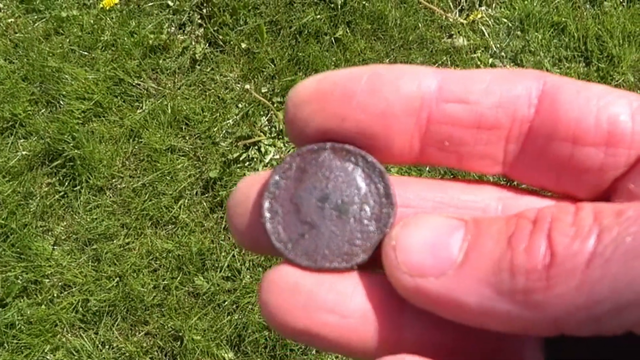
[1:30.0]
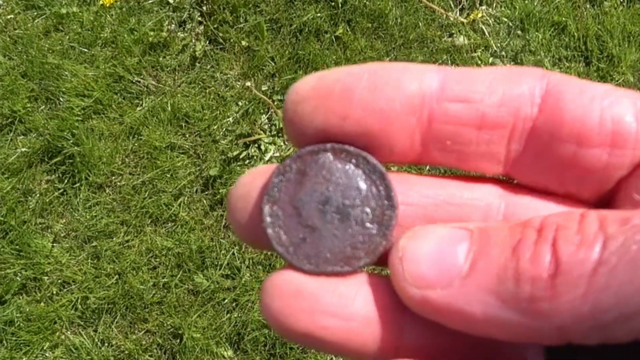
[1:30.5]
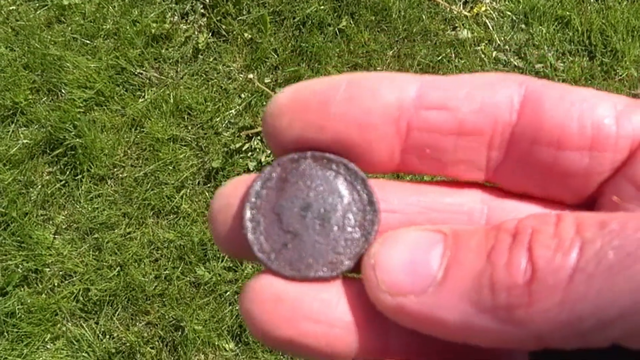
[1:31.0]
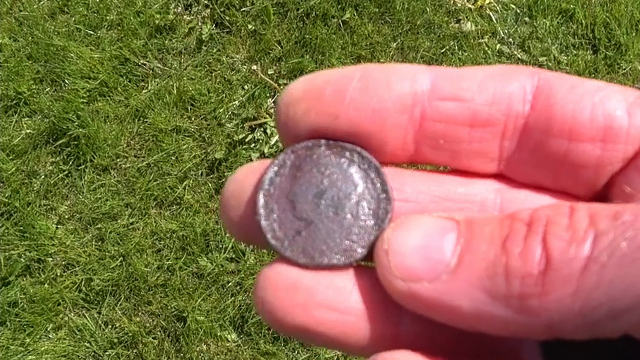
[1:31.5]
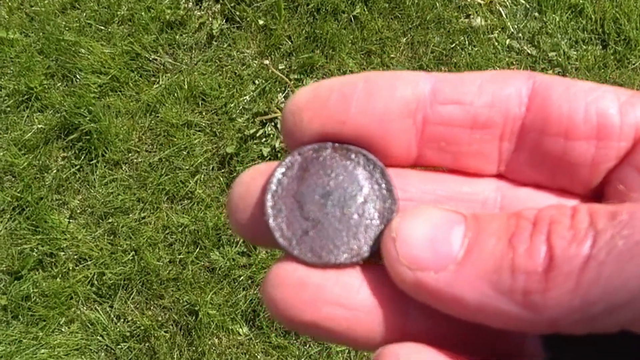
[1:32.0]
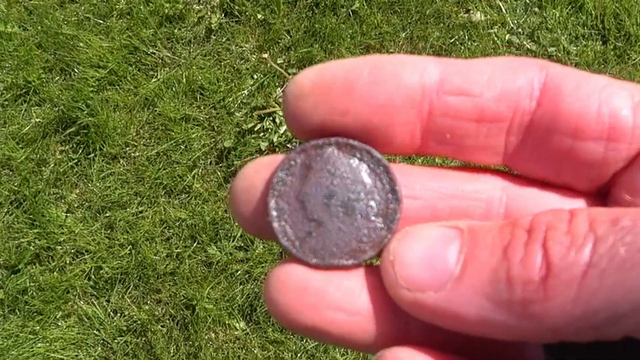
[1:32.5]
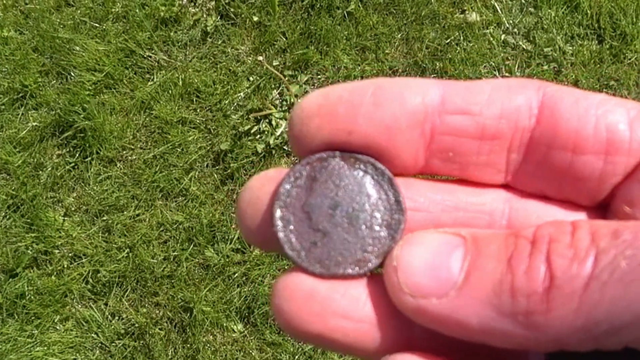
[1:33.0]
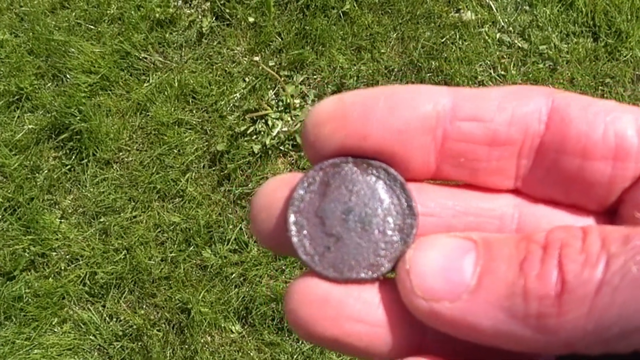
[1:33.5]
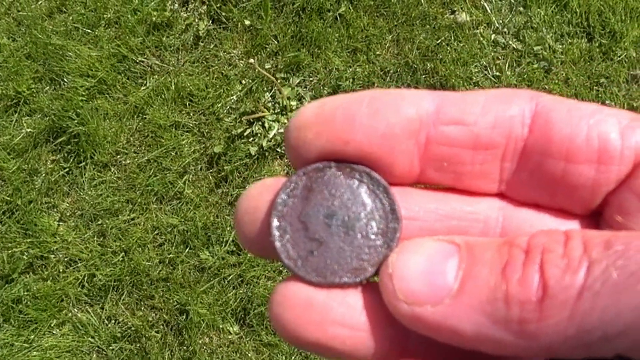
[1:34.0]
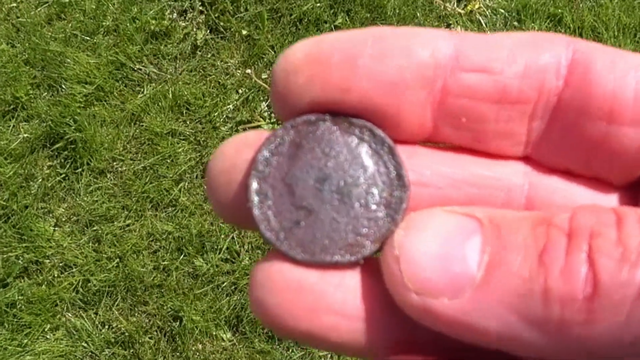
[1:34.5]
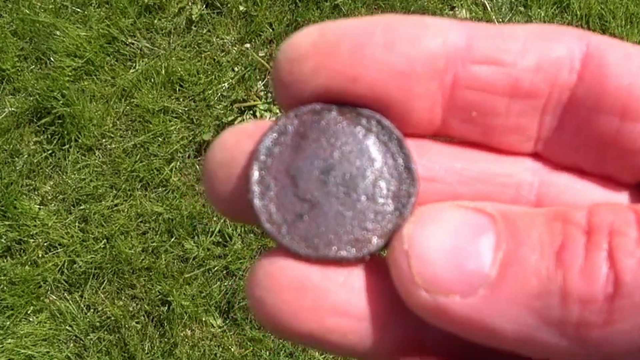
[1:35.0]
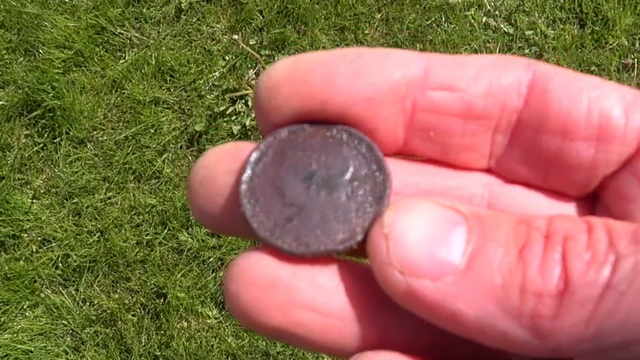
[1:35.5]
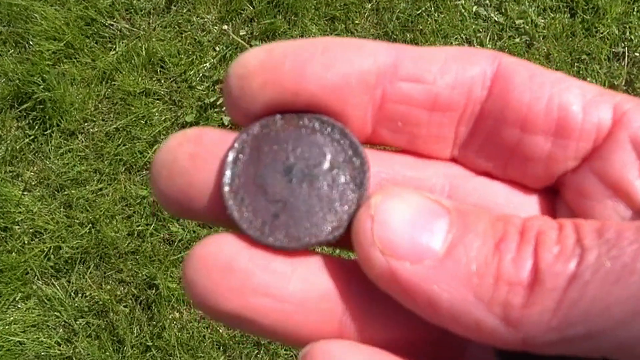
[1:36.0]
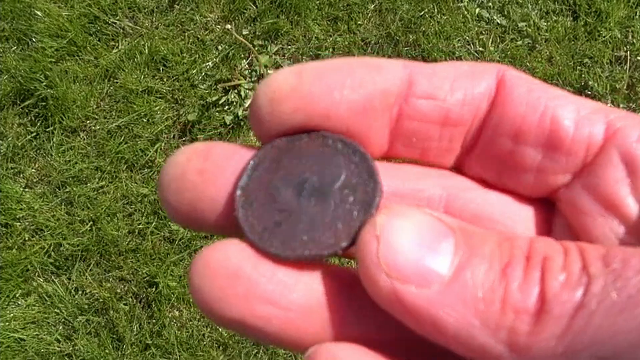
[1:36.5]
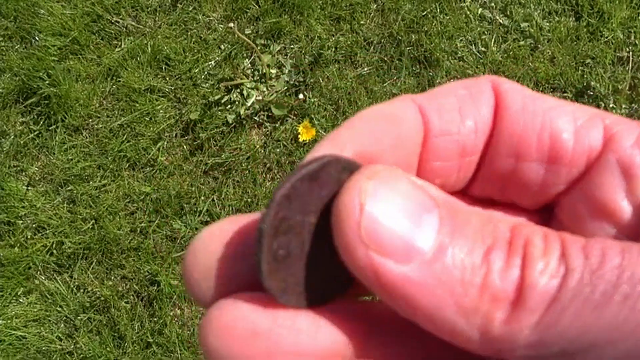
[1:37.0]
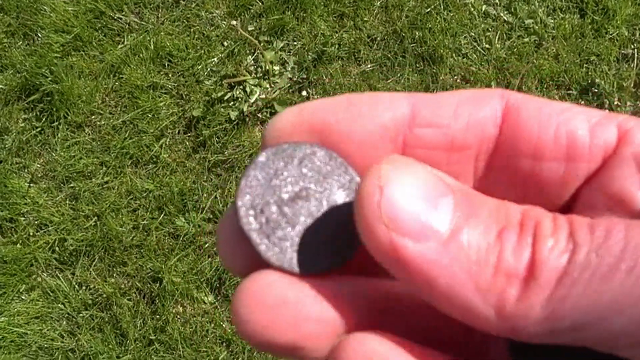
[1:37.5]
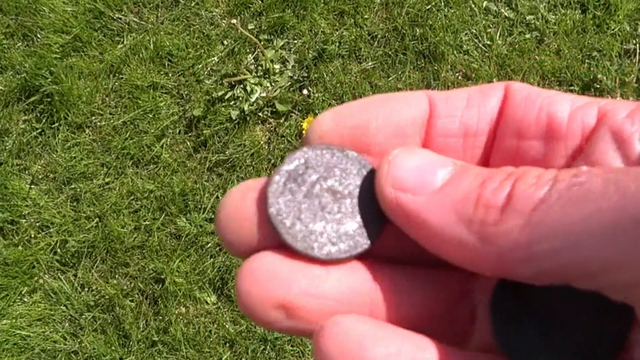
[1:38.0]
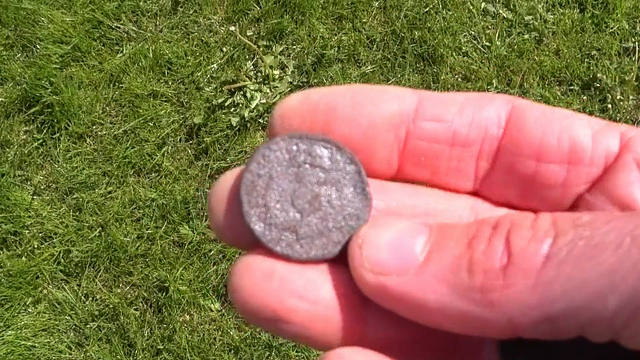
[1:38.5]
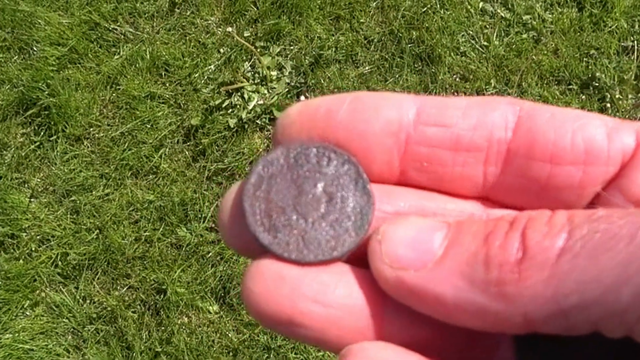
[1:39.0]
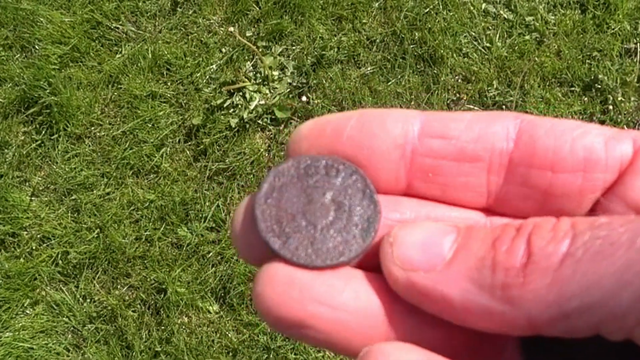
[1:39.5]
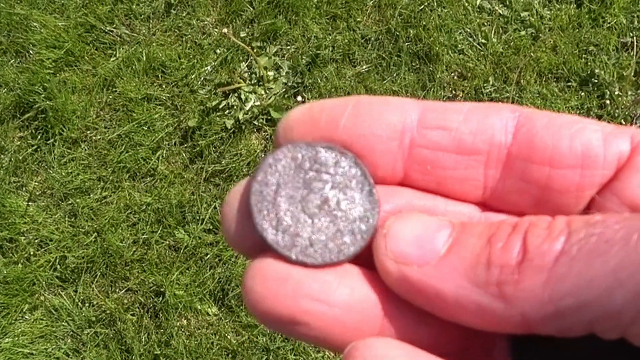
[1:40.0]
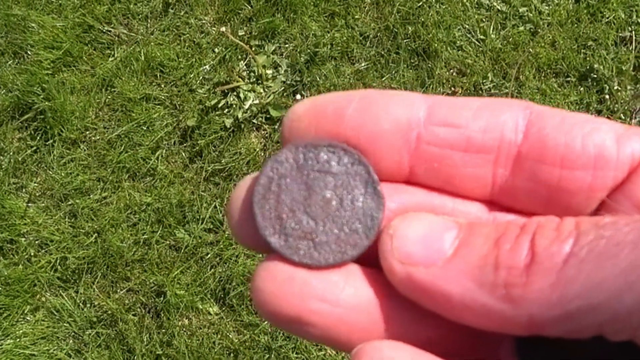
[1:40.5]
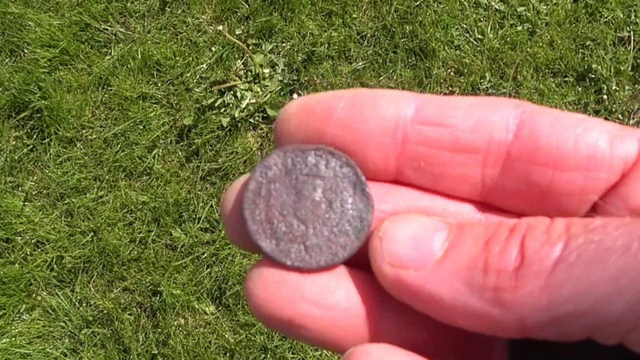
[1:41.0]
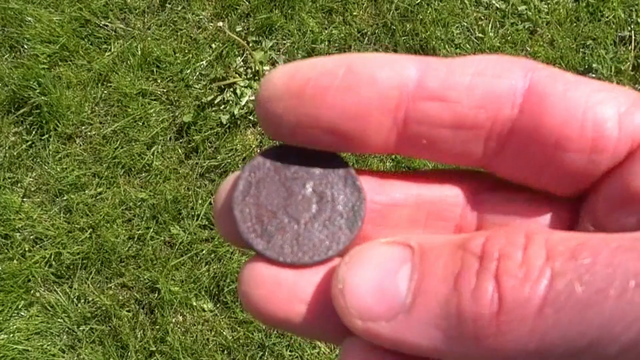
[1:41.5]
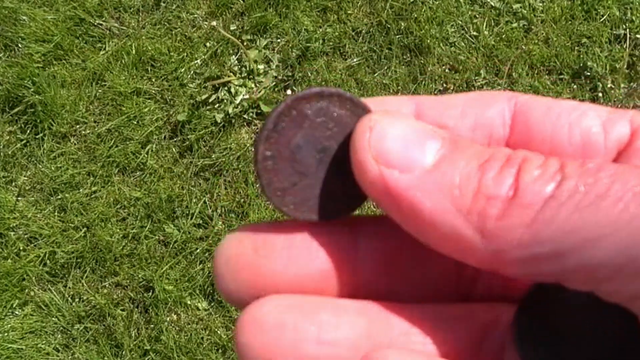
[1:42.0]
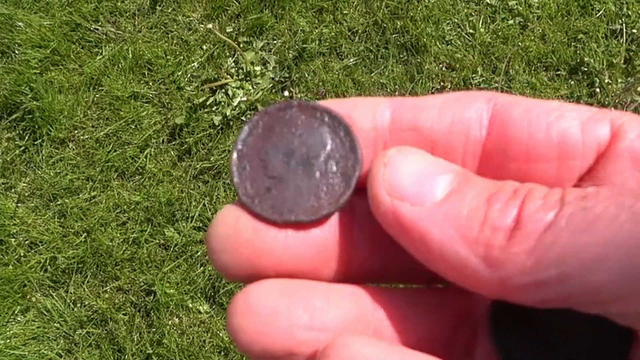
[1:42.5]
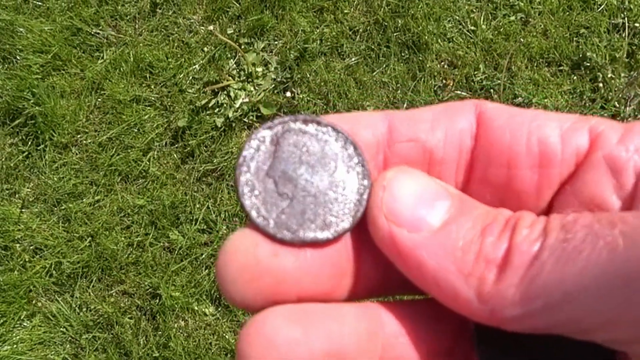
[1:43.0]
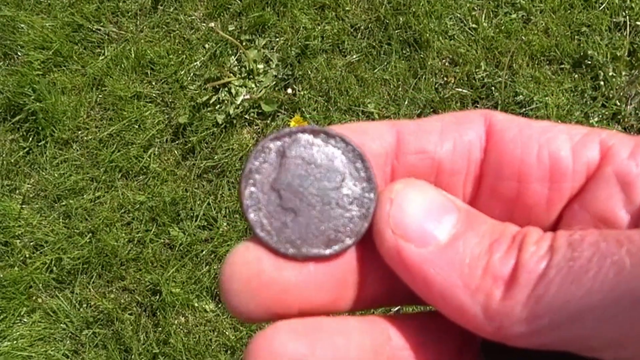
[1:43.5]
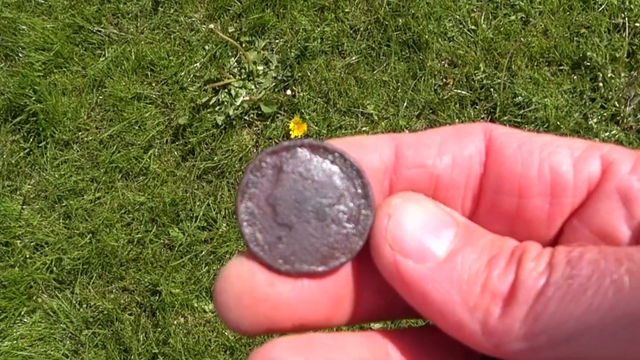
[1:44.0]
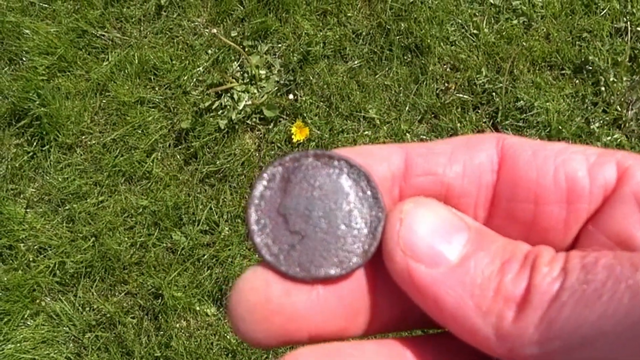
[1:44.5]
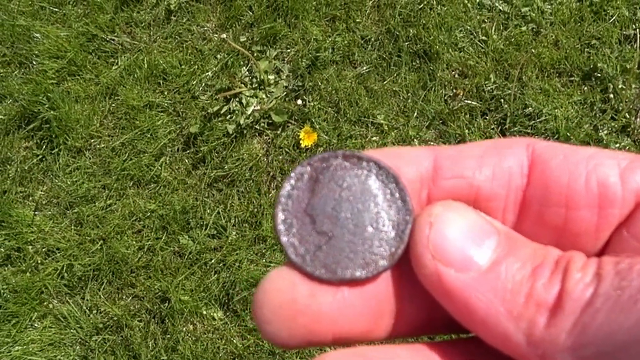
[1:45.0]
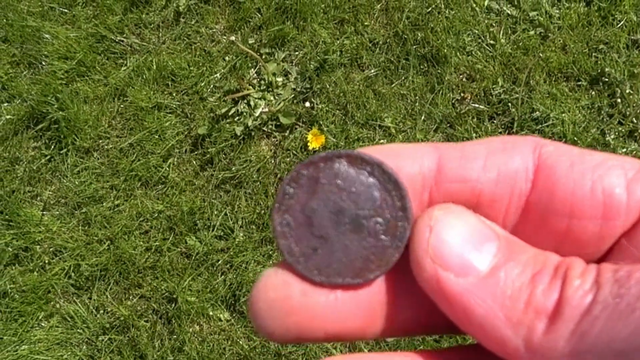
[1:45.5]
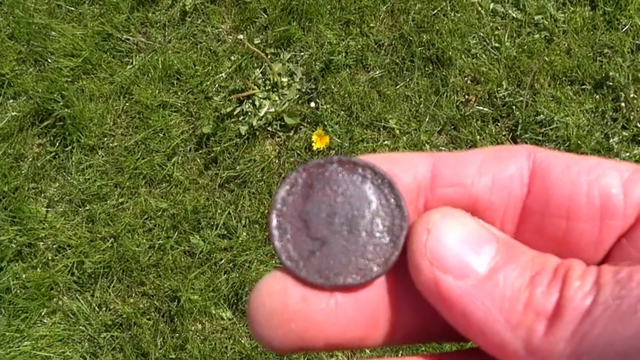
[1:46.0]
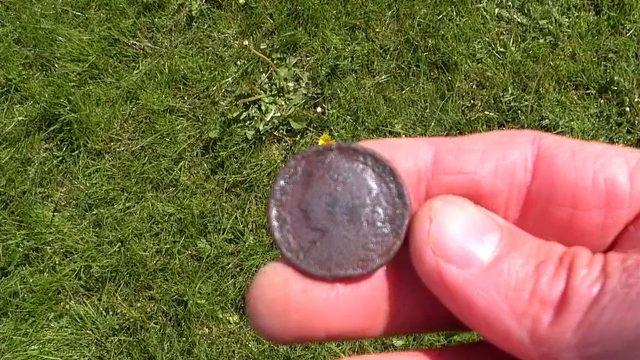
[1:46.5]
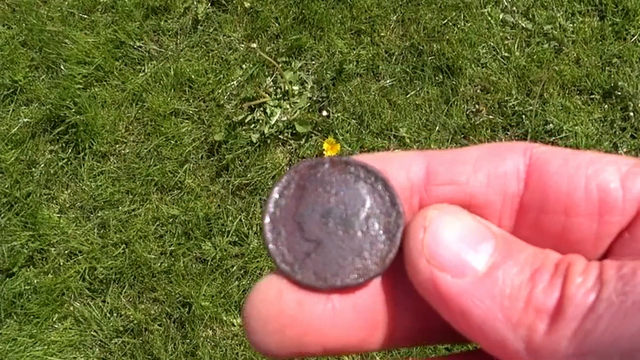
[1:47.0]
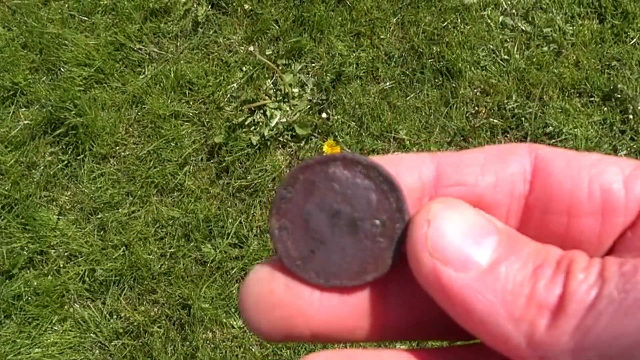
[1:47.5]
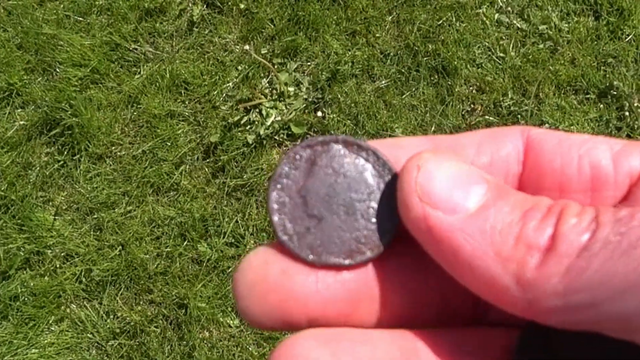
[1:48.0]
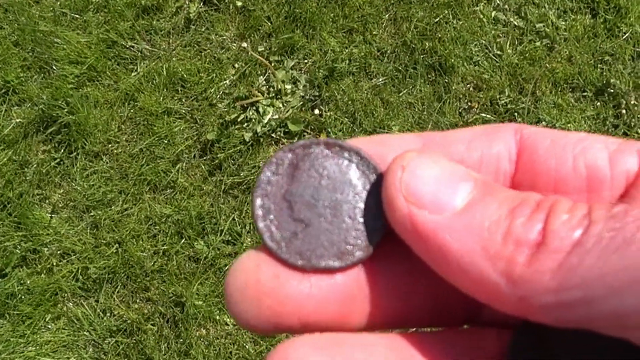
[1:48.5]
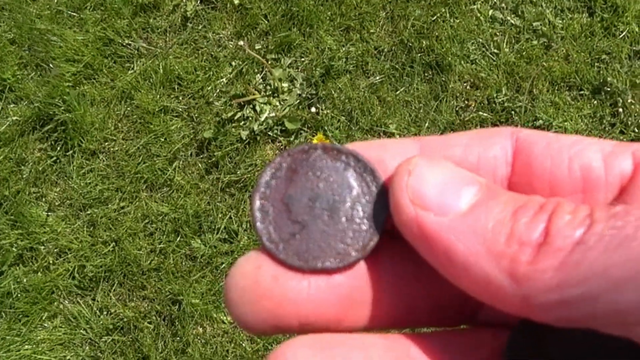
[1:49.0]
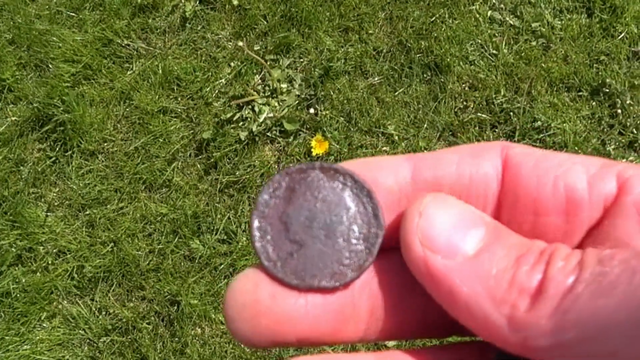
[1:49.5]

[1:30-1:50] The man still holds the coin on the right side of the frame; the grass is in focus and the coin is out of focus. The profile of the monarch's head faces the left of the frame. The footage is very handheld, and everything moves around a lot. He brings the coin closer to the camera, rotates it a little, flips it over, and rubs it. The other side appears to show a single thistle. The hand wobbles the coin so the light catches it, then flips it back to show the face again. The sun glints off the coin. A dandelion with a yellow flower is in the background. His fingers are a little dirty and a little scratched, with no visible cuts. The grass is very green but somewhat unkempt, with one dandelion in the centre of the frame and one in the top left corner. He shows both sides of the coin and tries to catch the sunlight on it.